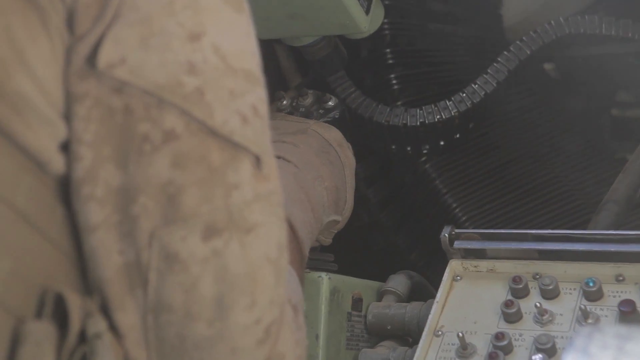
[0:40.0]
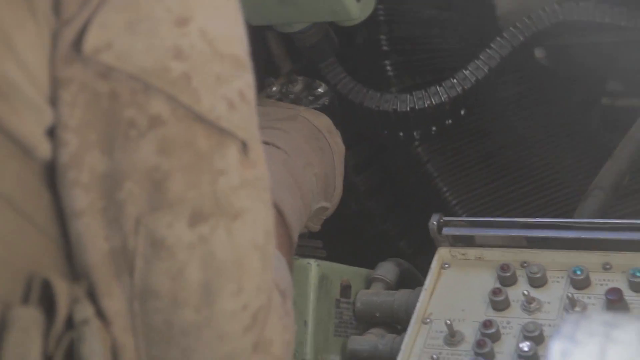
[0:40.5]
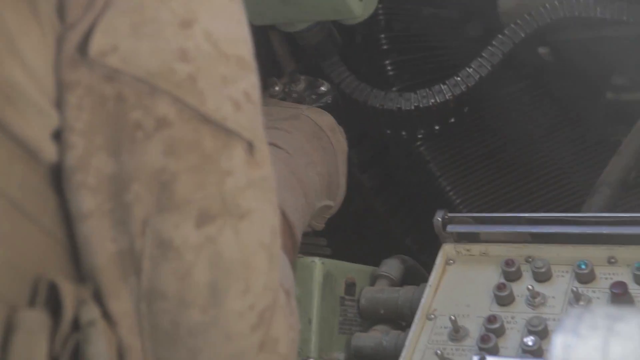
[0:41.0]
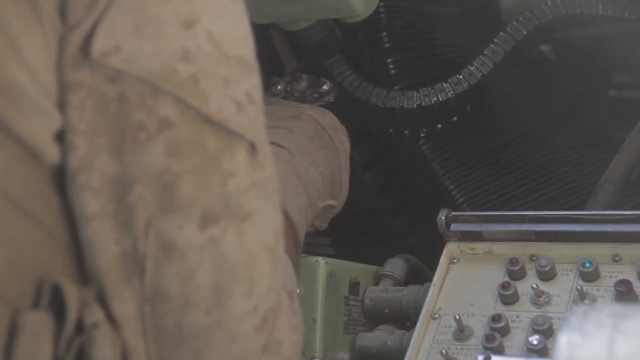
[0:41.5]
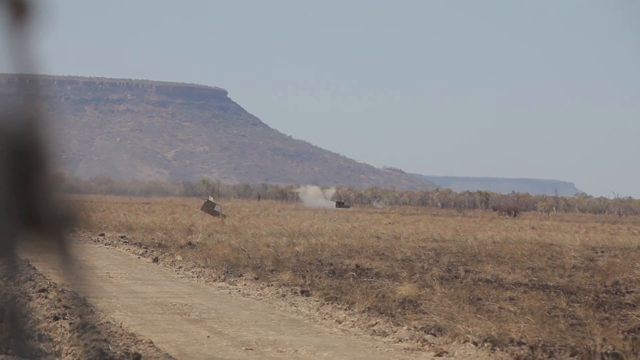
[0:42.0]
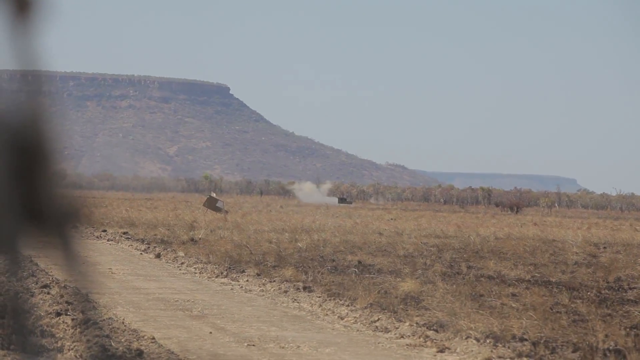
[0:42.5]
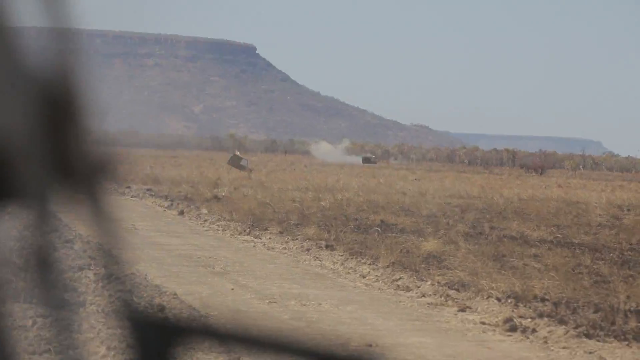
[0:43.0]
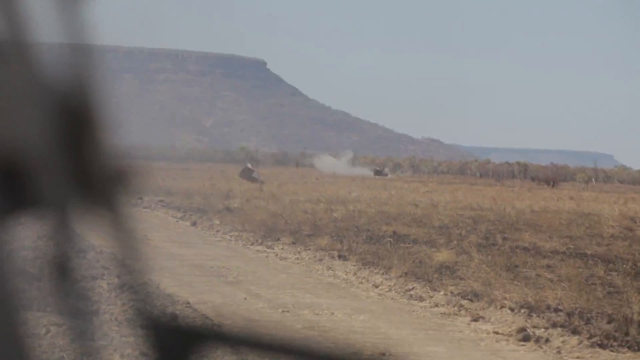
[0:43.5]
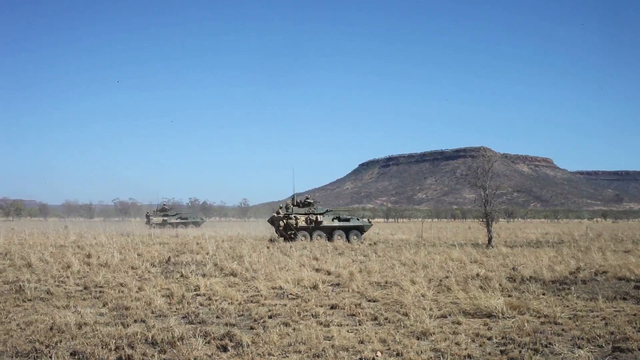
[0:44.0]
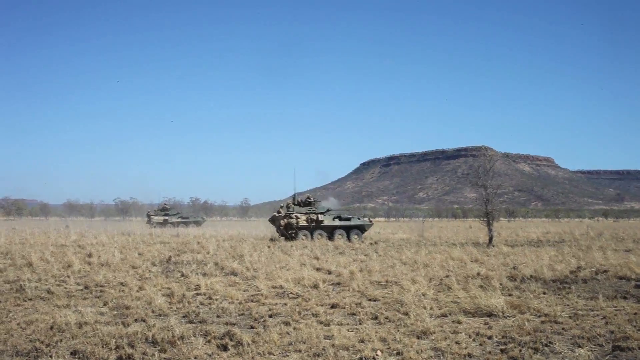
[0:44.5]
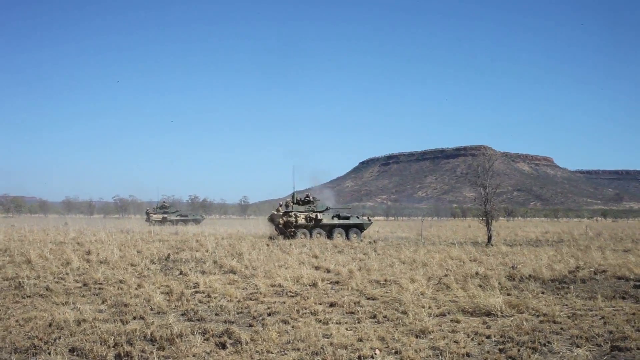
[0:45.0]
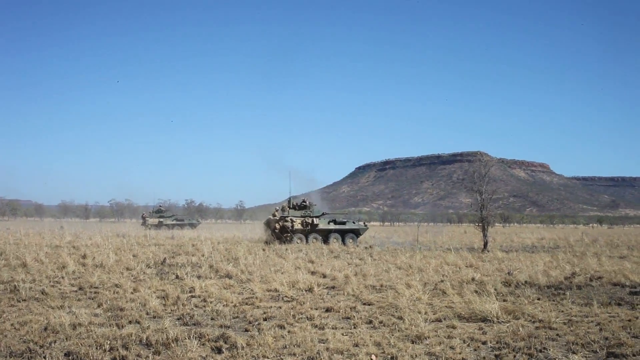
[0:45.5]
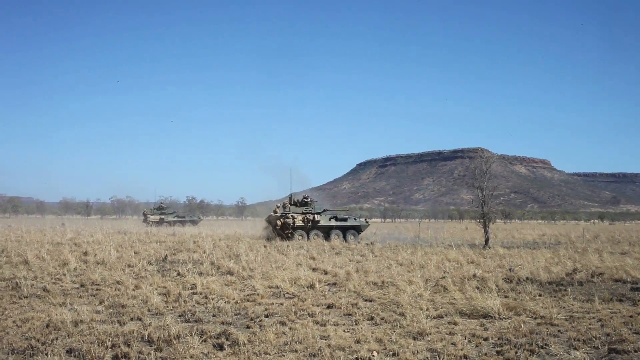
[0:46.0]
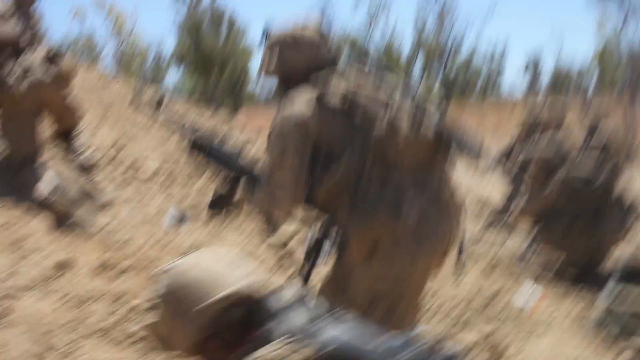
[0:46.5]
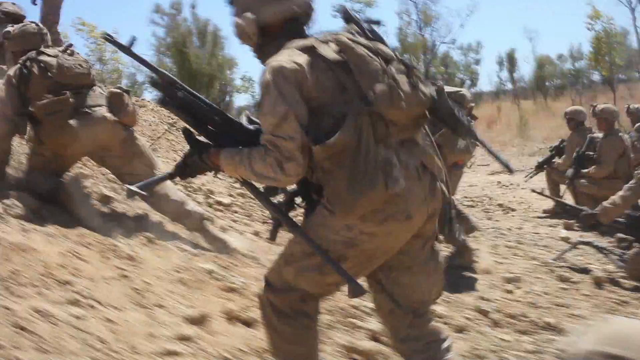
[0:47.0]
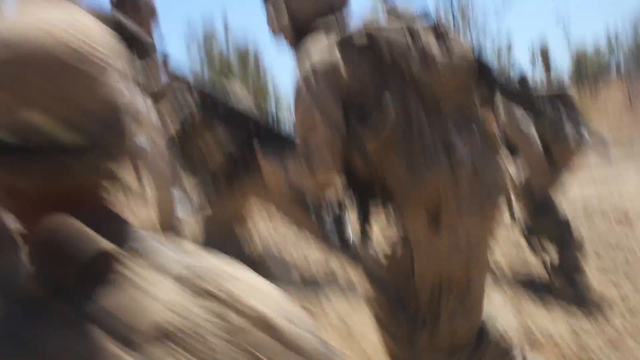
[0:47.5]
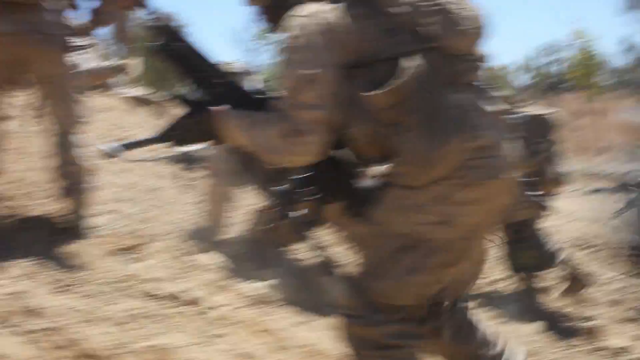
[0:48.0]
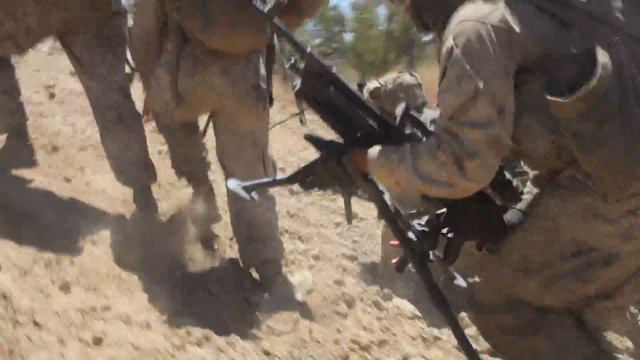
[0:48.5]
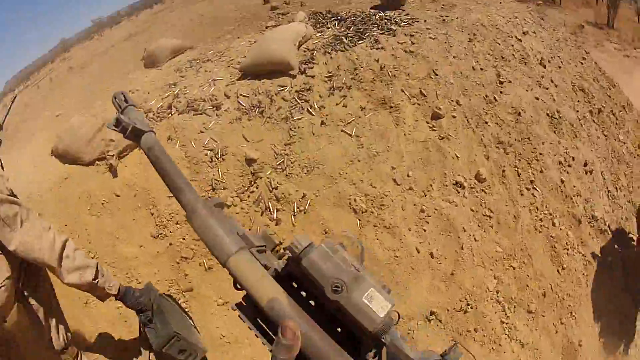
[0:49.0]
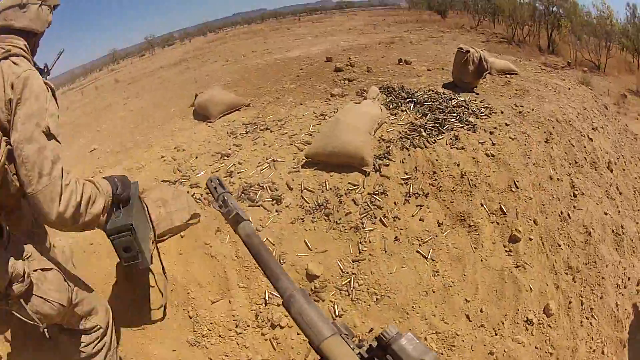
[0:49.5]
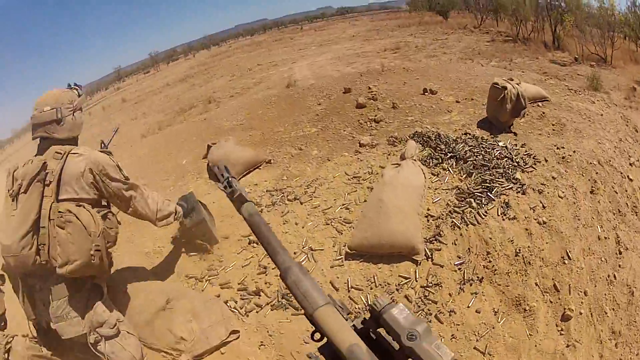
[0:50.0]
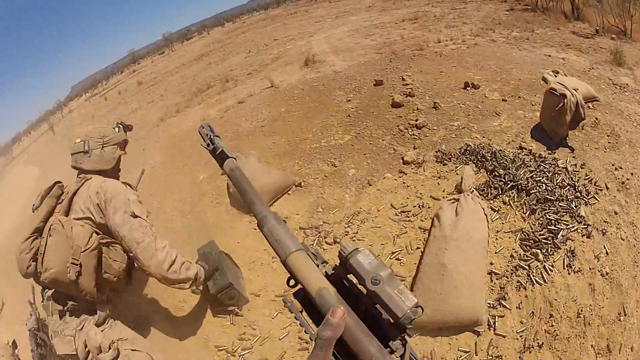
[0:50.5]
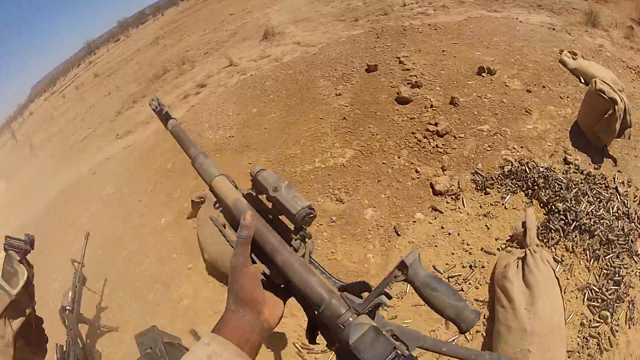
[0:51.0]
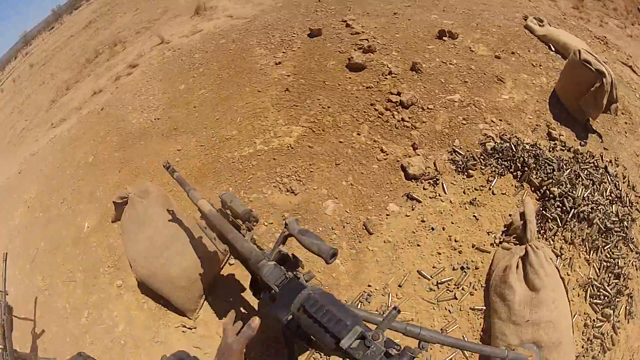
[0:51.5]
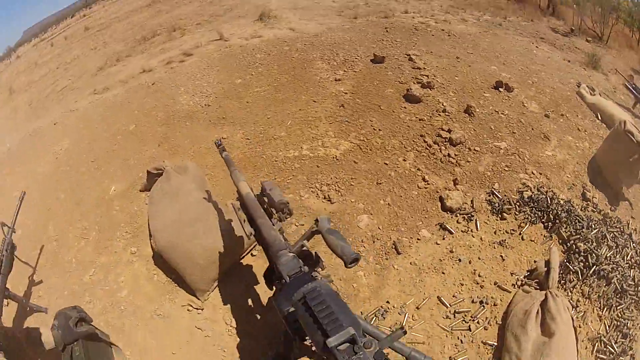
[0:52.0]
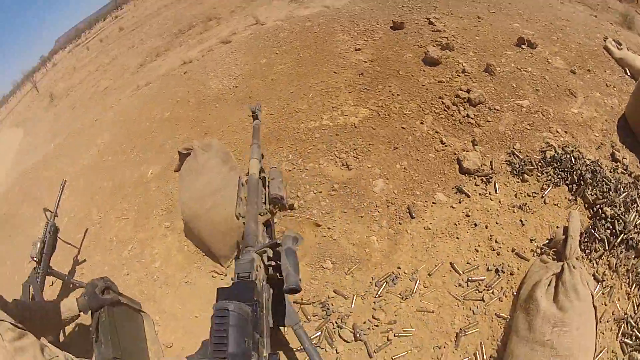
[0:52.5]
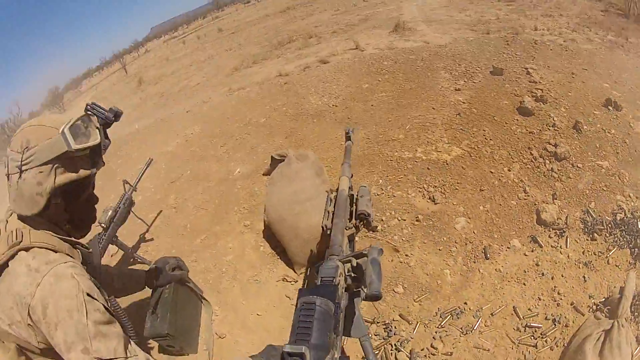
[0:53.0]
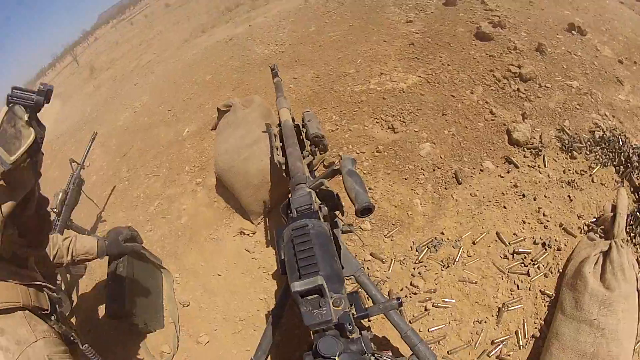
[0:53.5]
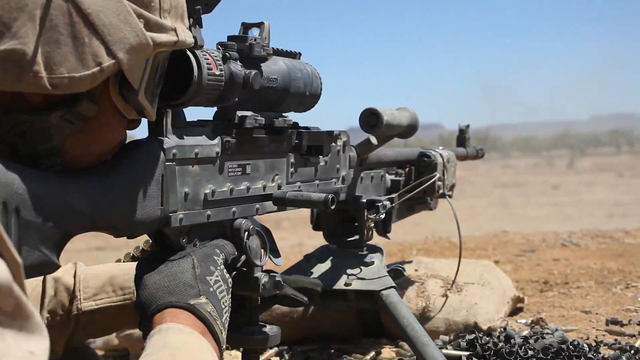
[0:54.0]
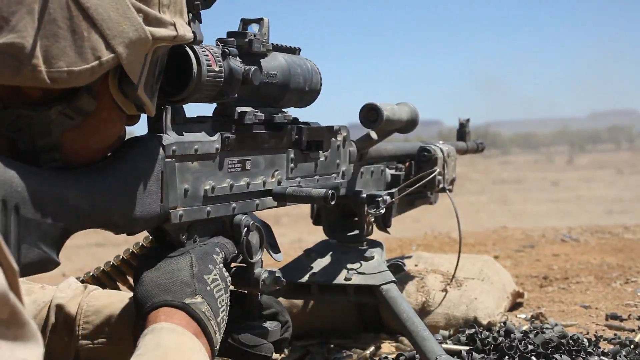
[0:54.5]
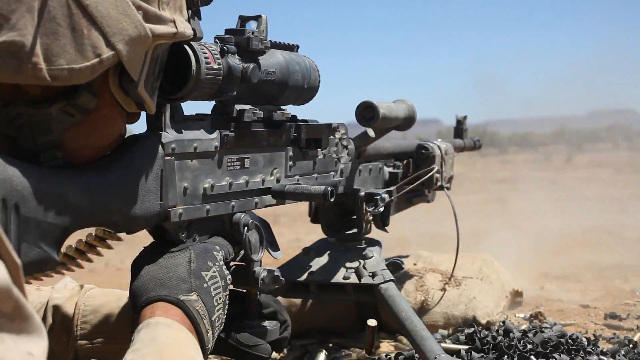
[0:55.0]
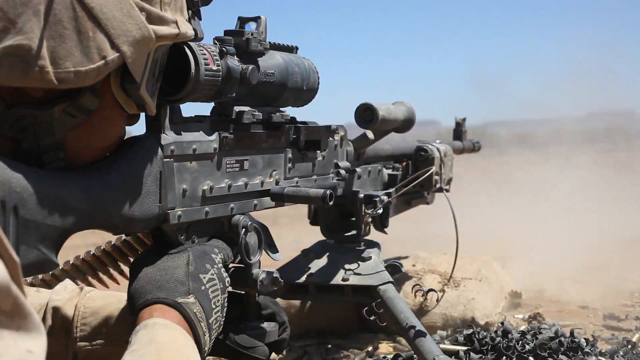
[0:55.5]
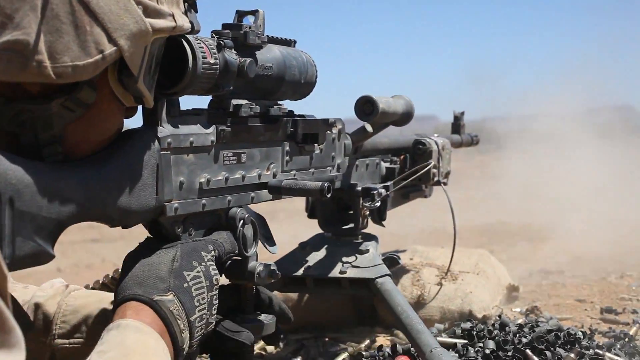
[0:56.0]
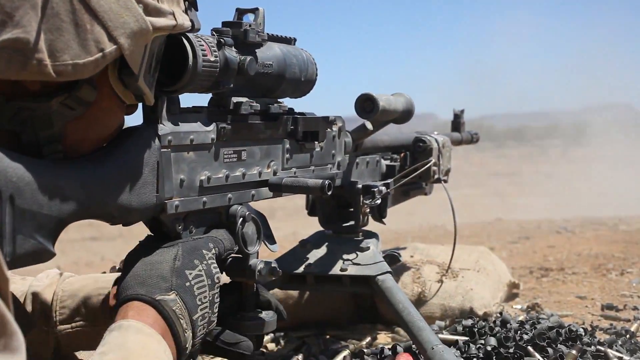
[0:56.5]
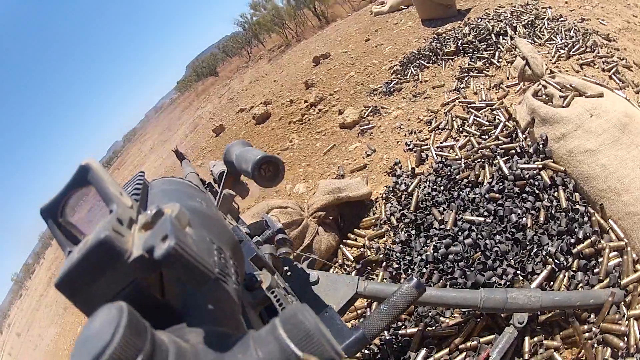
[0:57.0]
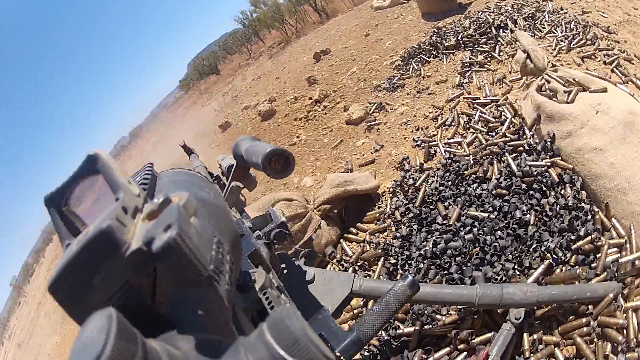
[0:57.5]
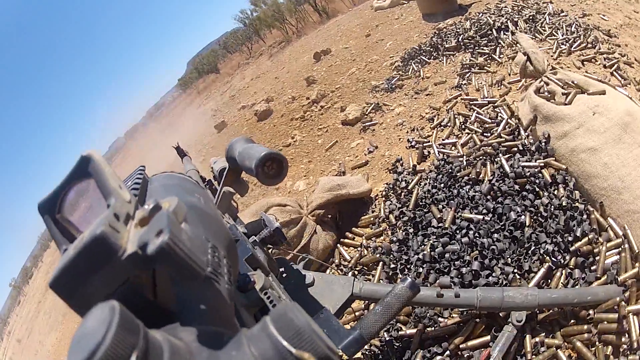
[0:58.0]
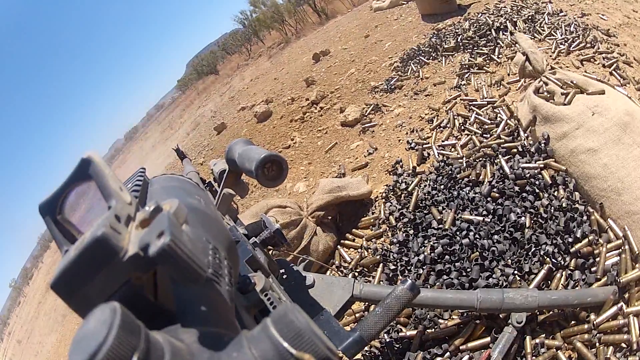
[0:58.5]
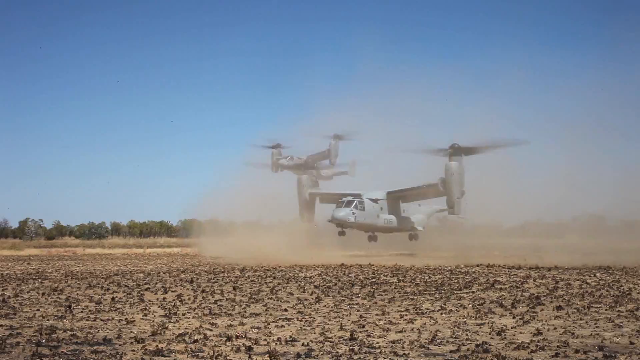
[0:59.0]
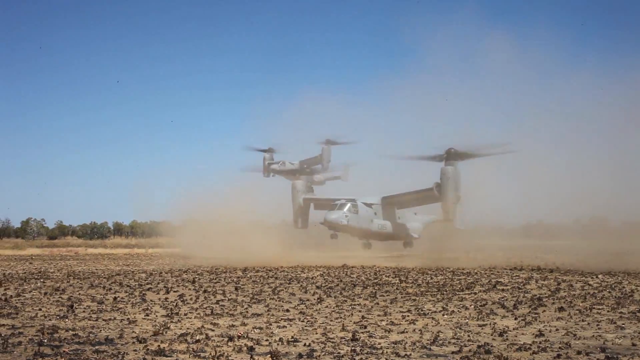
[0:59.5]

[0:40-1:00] An interior view of some kind of vehicle shows a soldier on the left side, with only his right arm visible and his hand gripping the handle of a large machine gun. To the right of him is a switch box with various lights. The footage cuts to an angled view to the right of the gun as it fires, the barrel lighting up with muzzle flashes. In the distance, across a mostly flat, brown grass-covered firing range, a target is surrounded by dust clouds from being hit. The camera changes to infantry fighting vehicles in a firing range shooting their main cannons. Next, multiple soldiers seem to be bounding up a small dirt hill with rifles, setting up to start firing on top of the hill. The view is the point of view of one of them using a light machine gun with large optics and a tripod. Once they are set up, the camera changes to an over-the-shoulder view as they fire in small bursts down the range they are looking at. They are surrounded by various shell casings from the rifle, as well as belt links.